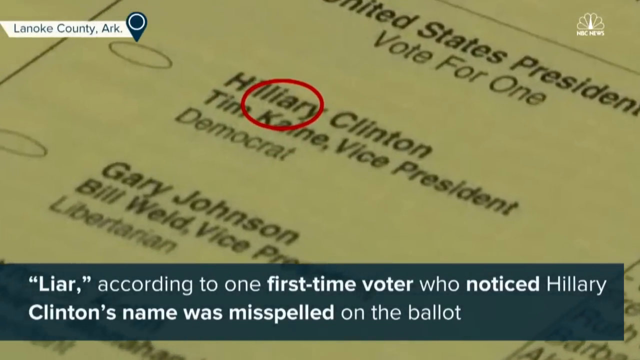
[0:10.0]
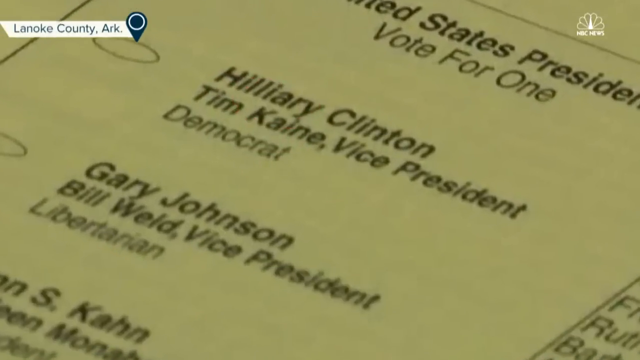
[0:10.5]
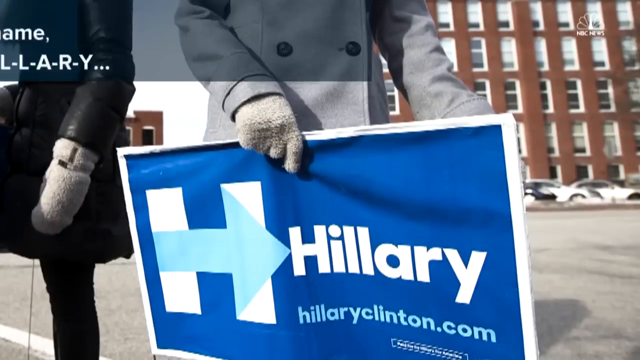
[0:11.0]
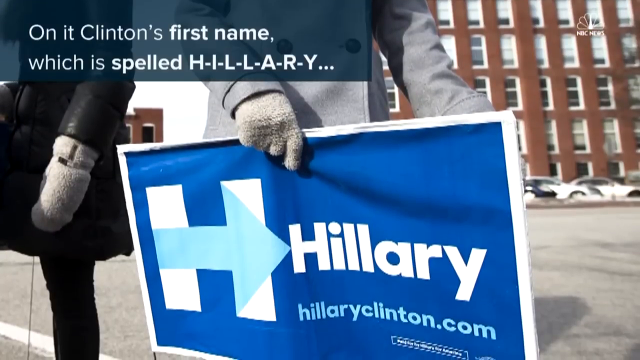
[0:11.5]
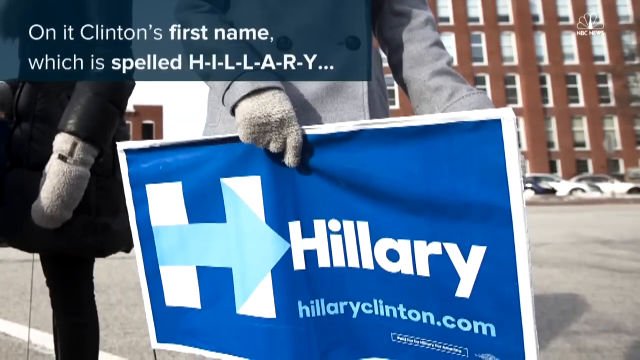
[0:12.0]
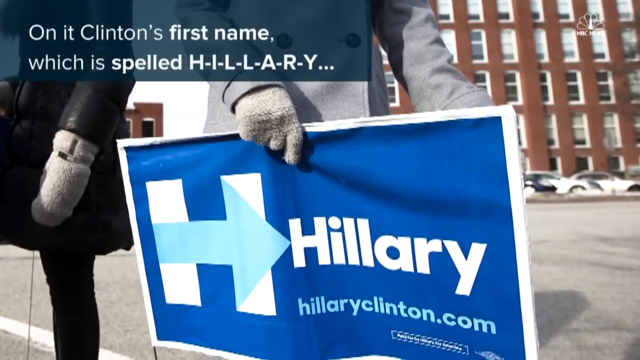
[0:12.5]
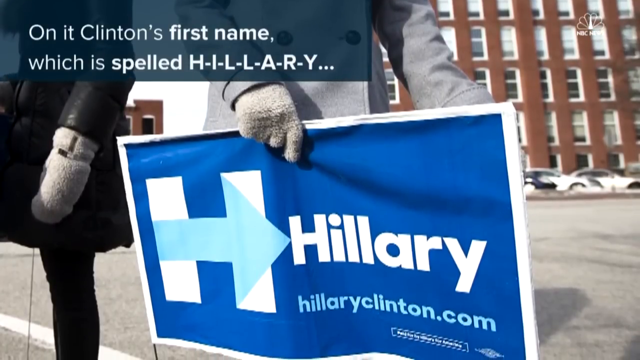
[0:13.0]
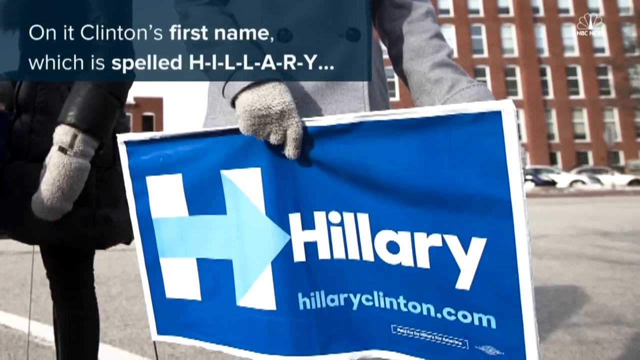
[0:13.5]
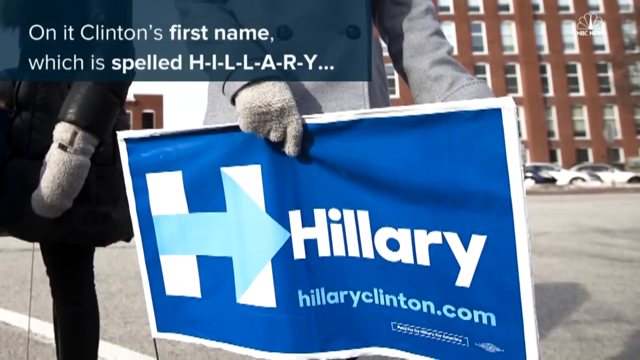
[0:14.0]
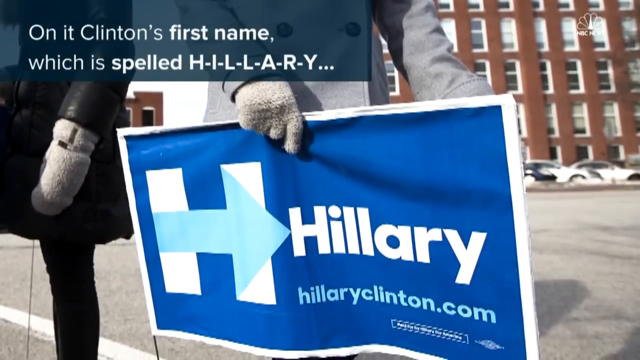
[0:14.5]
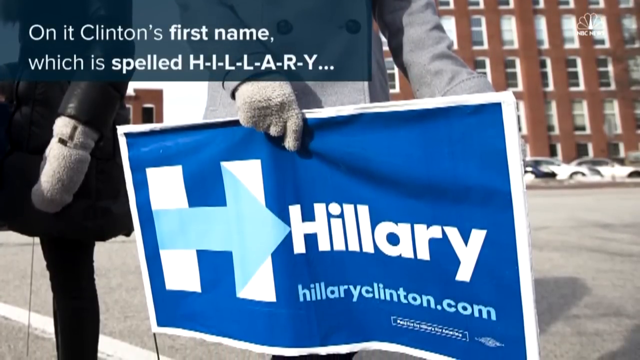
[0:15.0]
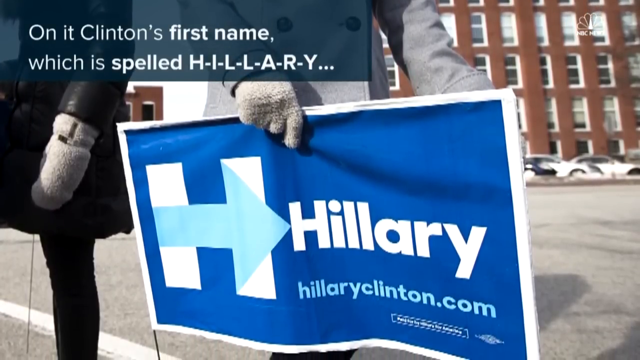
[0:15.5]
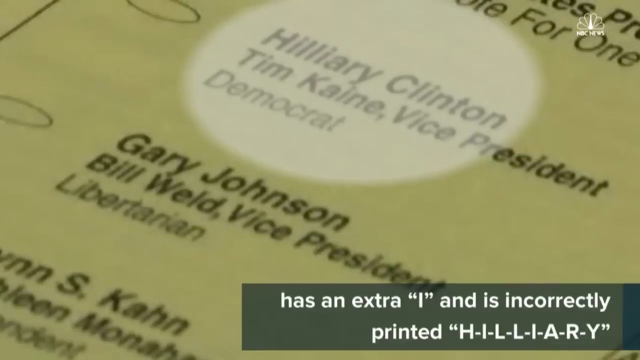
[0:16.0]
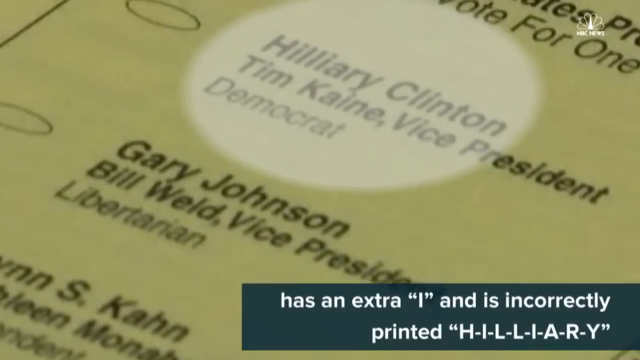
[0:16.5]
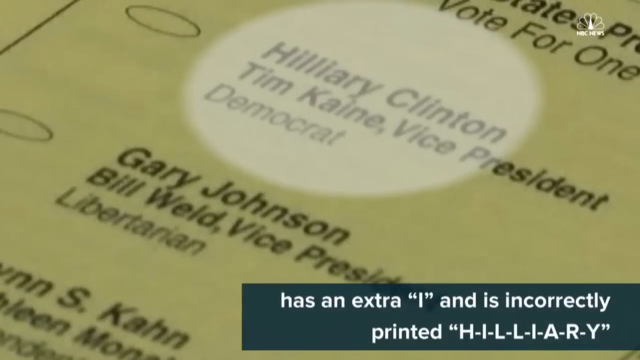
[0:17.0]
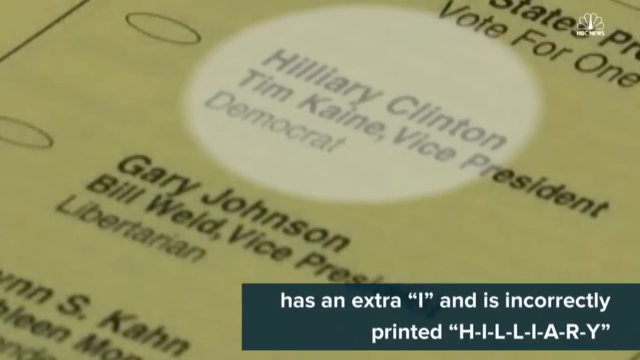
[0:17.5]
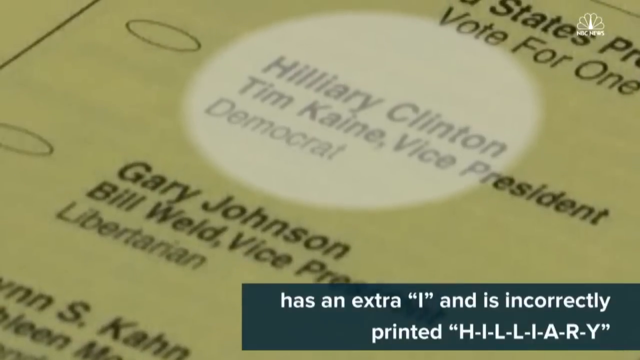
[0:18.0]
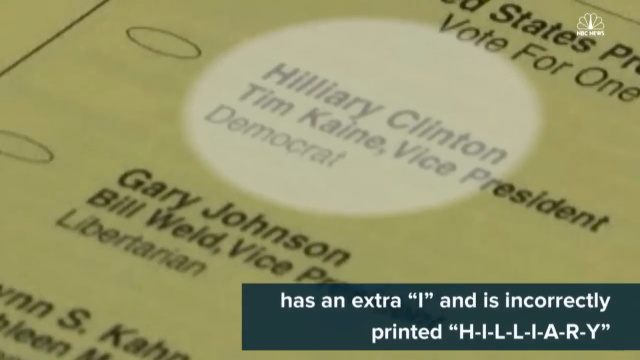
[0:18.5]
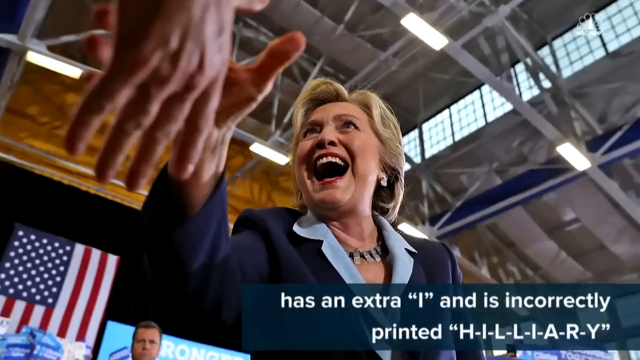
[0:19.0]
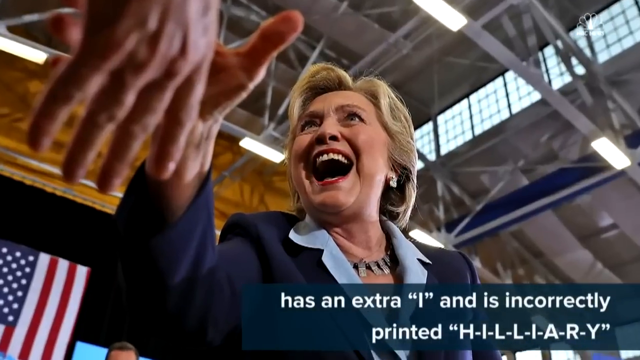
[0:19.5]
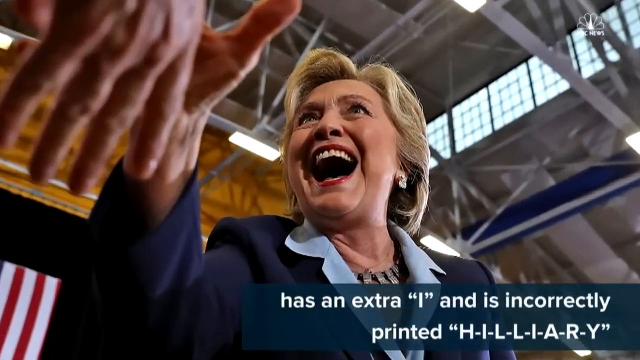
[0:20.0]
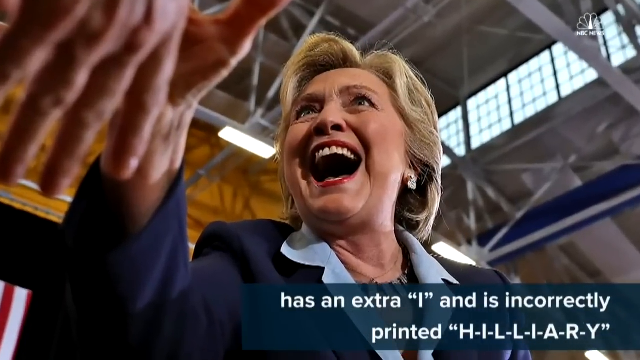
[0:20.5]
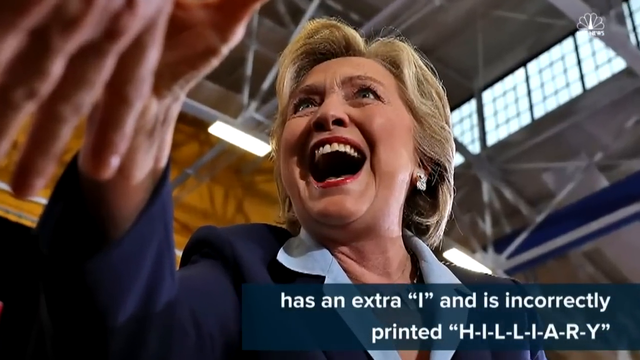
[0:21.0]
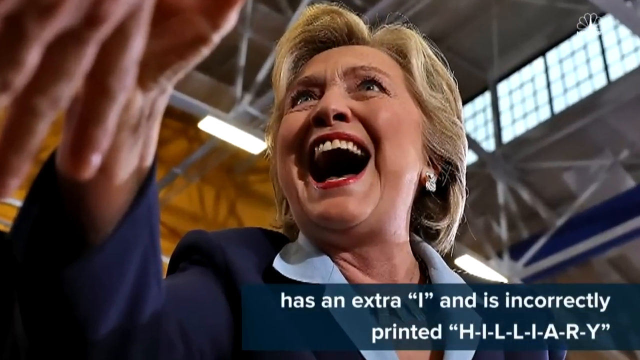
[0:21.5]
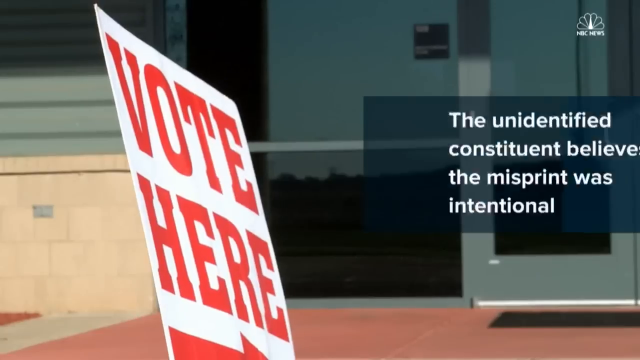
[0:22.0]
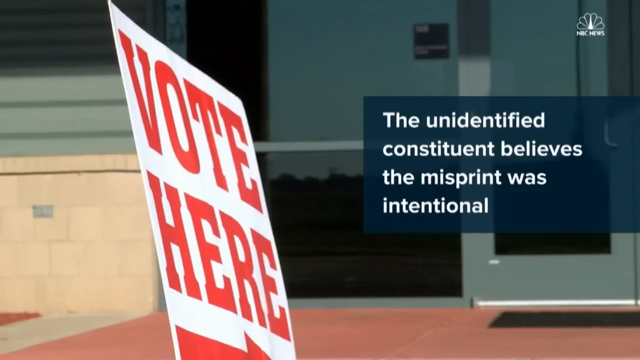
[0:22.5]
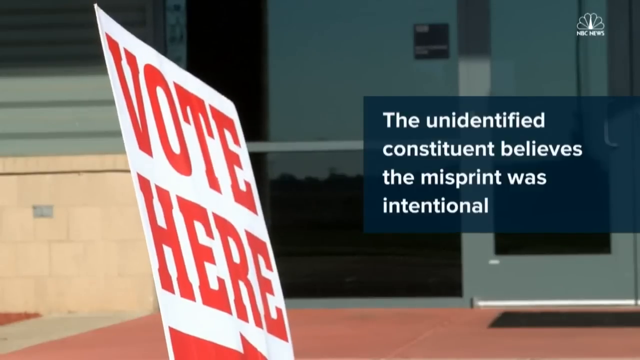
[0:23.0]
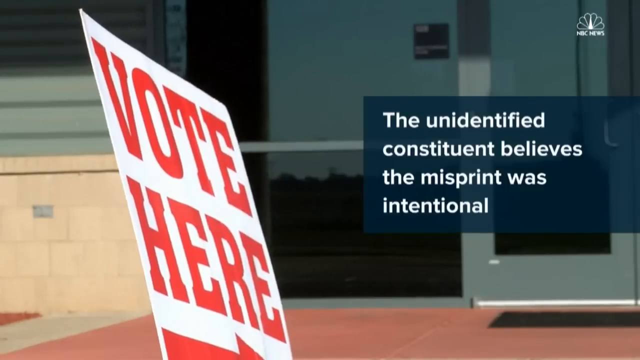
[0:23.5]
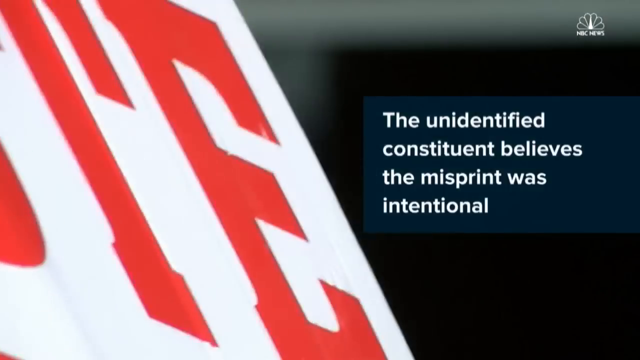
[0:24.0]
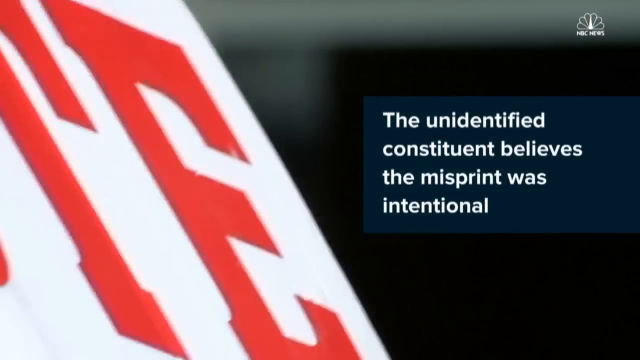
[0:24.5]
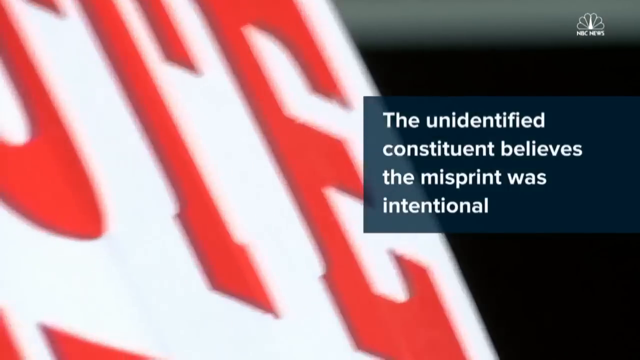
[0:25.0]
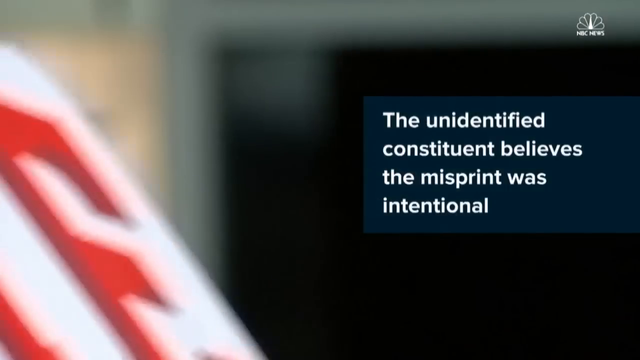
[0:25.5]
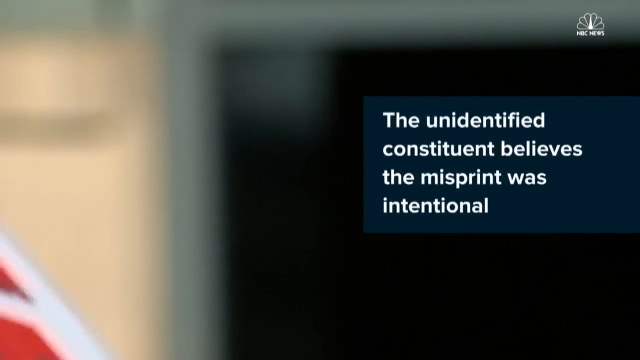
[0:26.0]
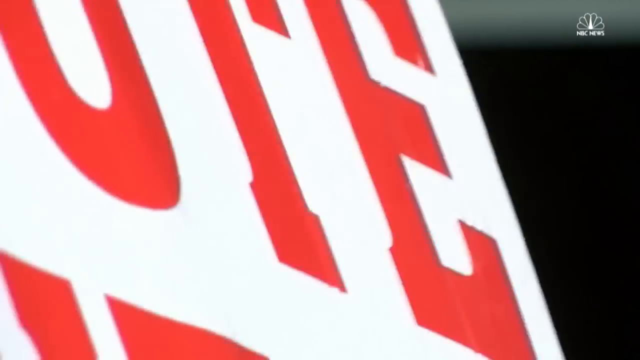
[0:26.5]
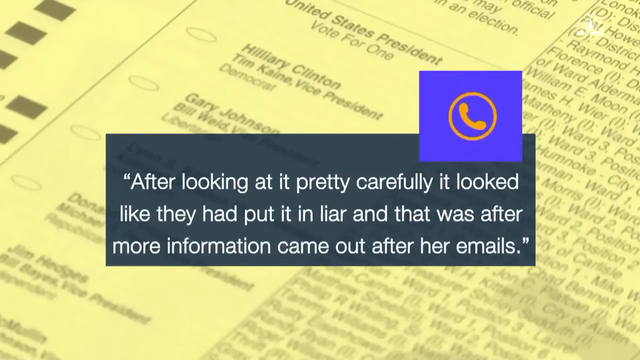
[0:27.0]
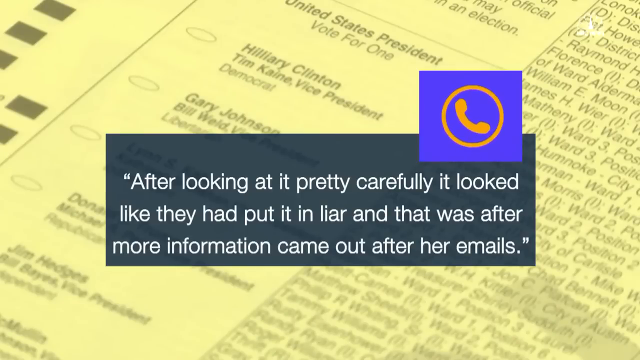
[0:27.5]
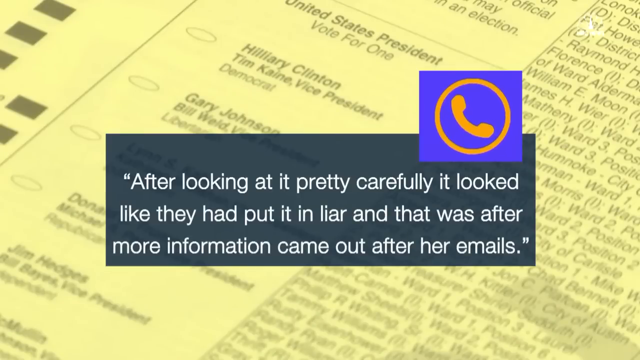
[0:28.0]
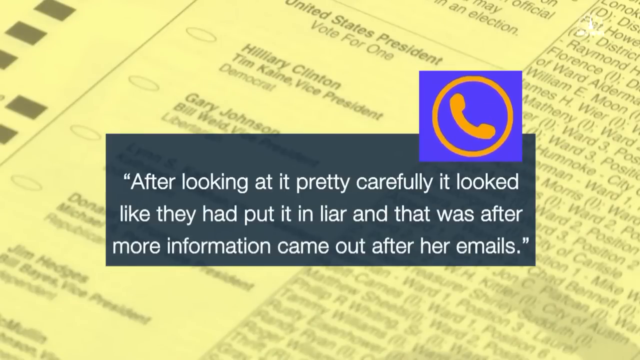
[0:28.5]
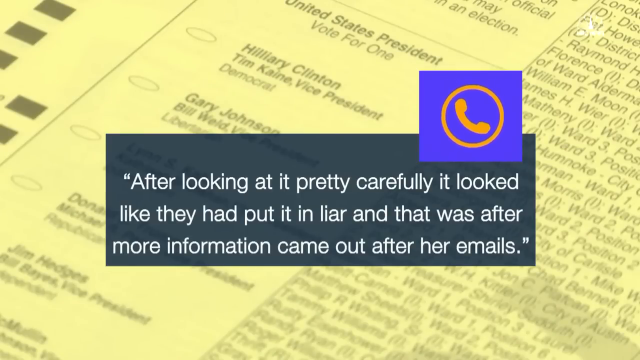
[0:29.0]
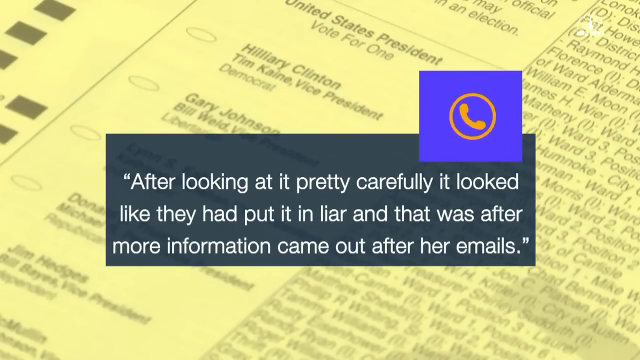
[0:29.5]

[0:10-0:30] A ballot slip shows the names Hillary Clinton and Tim Kaine. The scene changes to a person carrying a Hillary Clinton banner; nothing about the people is visible except that they are wearing coats and gloves. A heading in this section shows Clinton's first name, spelled H-I-L-L-A-R-Y. The video cuts back to the ballot slip, then to a vote here scene, apparently outside a polling station. It cuts back to the ballot slip, where an extra I has been inserted in Hillary's name, apparently by mistake, so that instead of H-I-L-L-A-R-Y it reads H-I-L-L-I-A-R-Y and the word "liar" appears in the name.